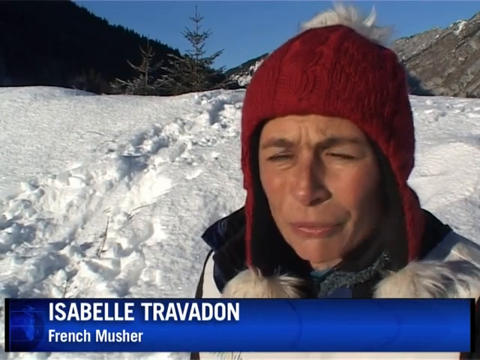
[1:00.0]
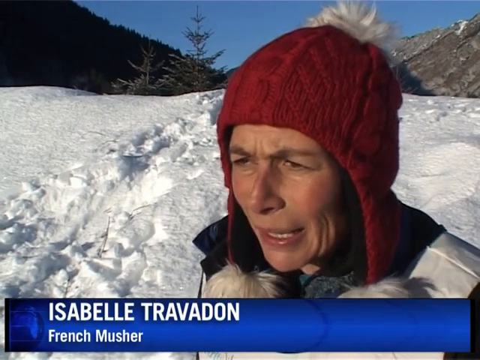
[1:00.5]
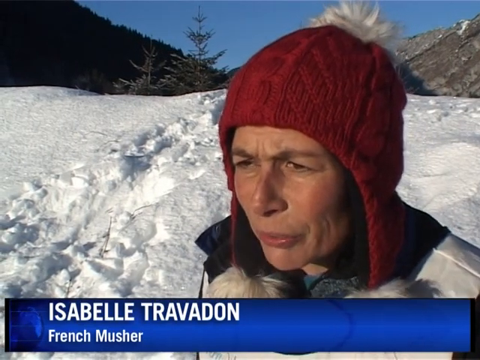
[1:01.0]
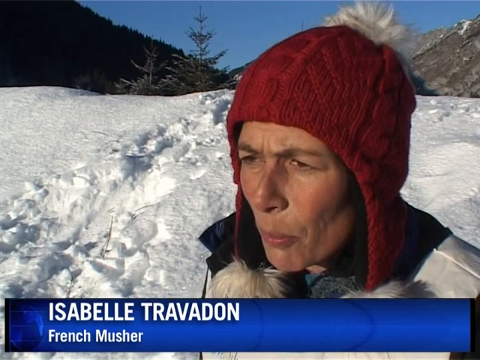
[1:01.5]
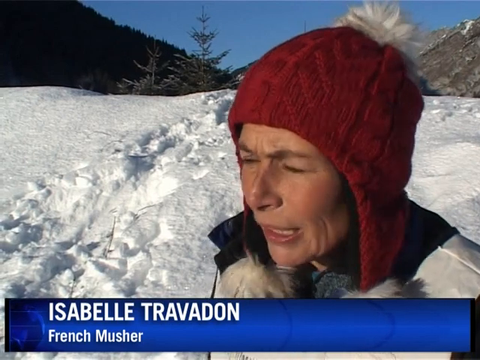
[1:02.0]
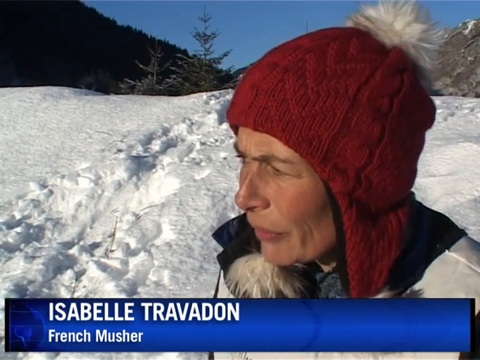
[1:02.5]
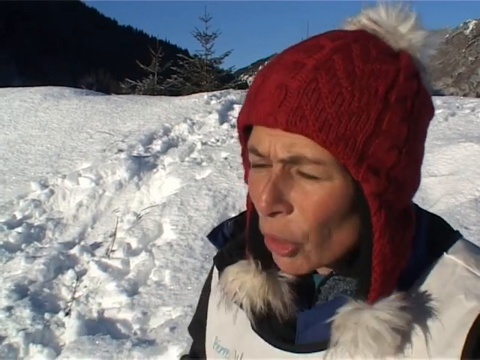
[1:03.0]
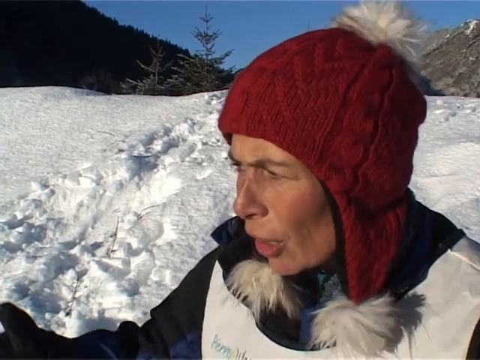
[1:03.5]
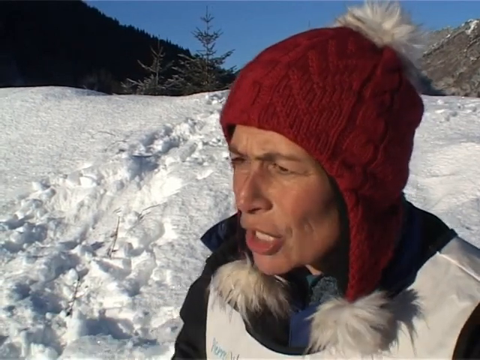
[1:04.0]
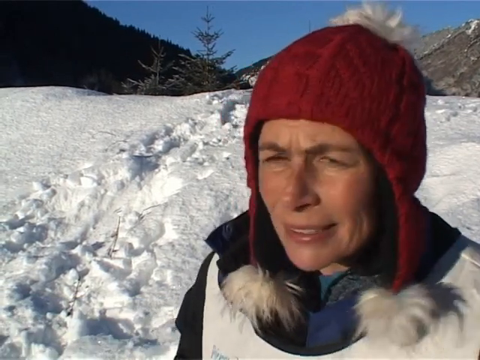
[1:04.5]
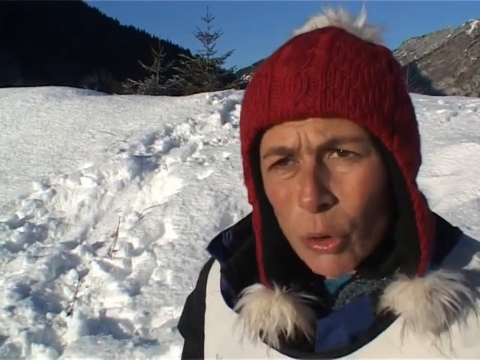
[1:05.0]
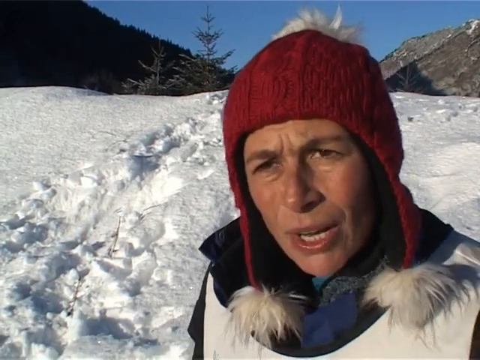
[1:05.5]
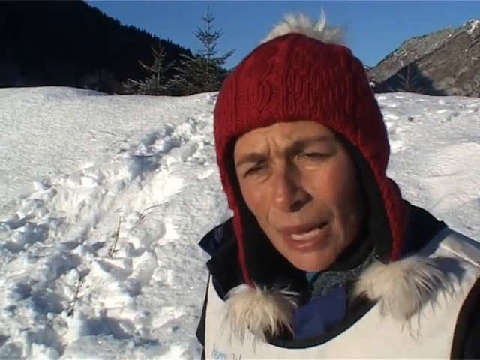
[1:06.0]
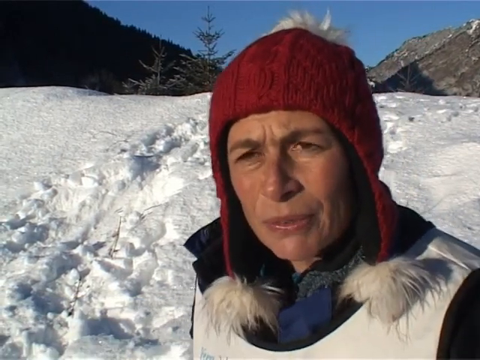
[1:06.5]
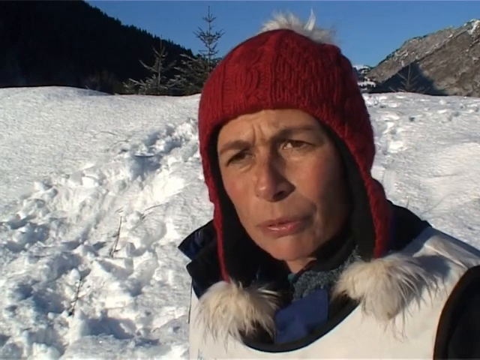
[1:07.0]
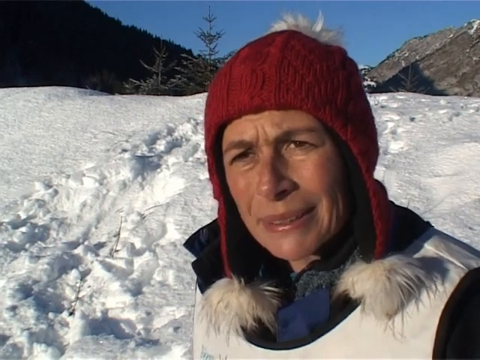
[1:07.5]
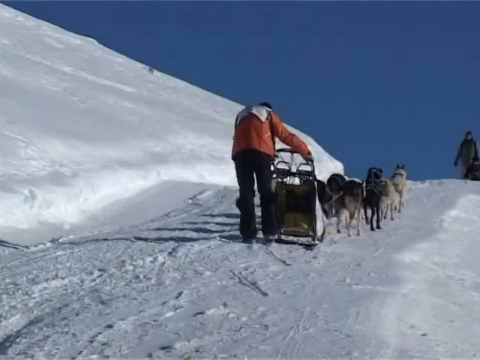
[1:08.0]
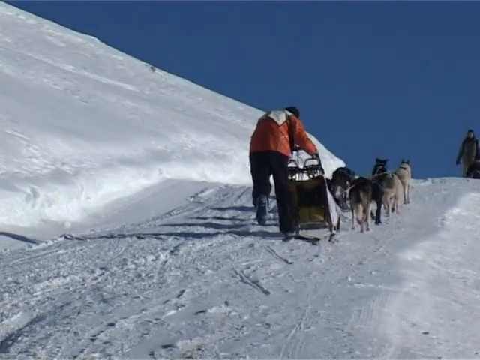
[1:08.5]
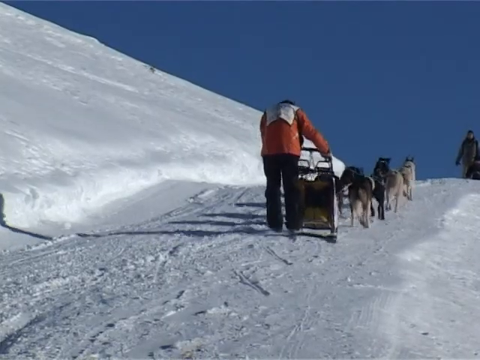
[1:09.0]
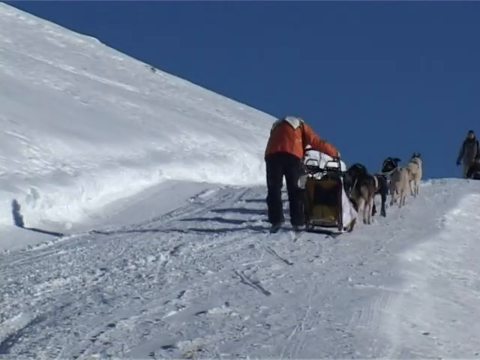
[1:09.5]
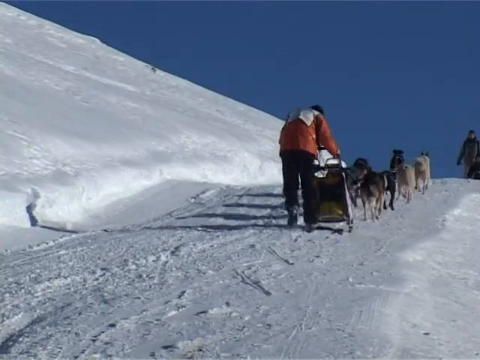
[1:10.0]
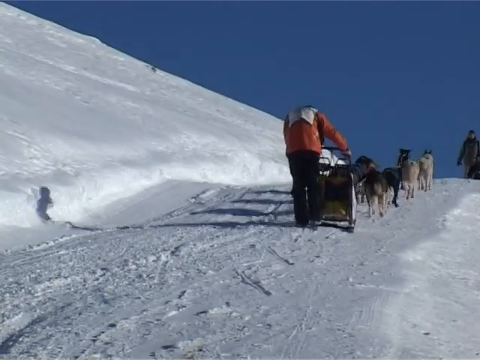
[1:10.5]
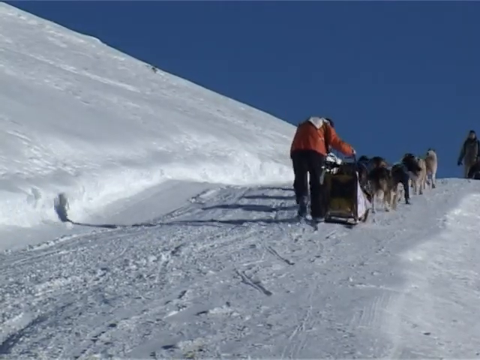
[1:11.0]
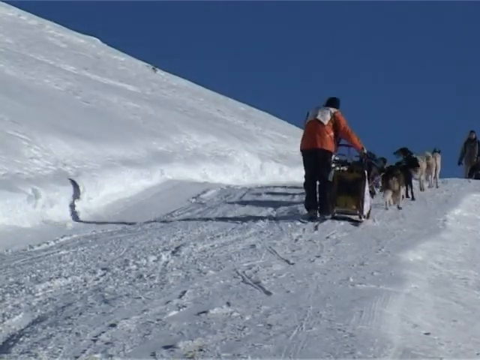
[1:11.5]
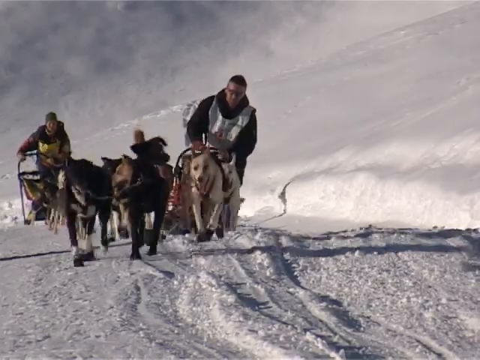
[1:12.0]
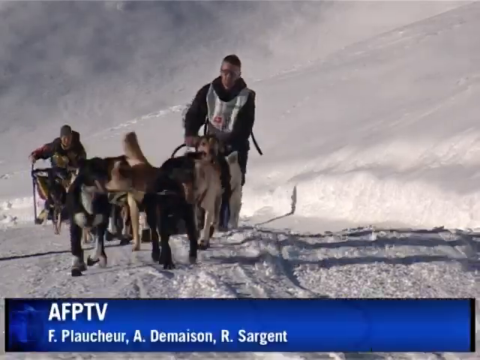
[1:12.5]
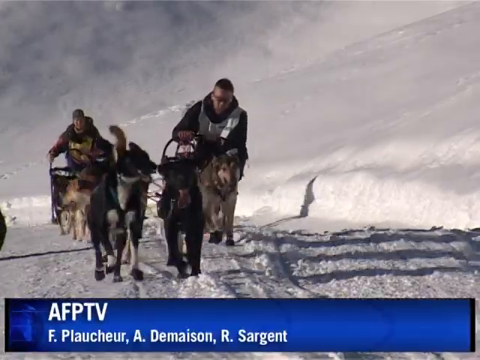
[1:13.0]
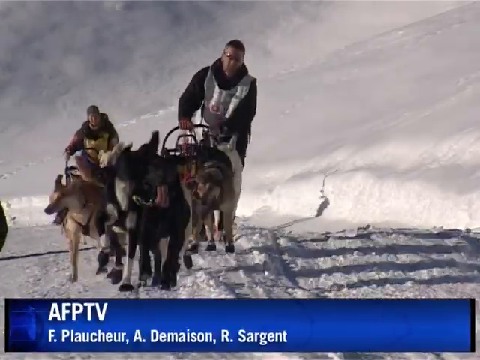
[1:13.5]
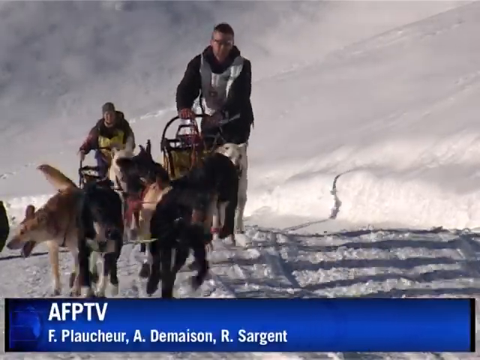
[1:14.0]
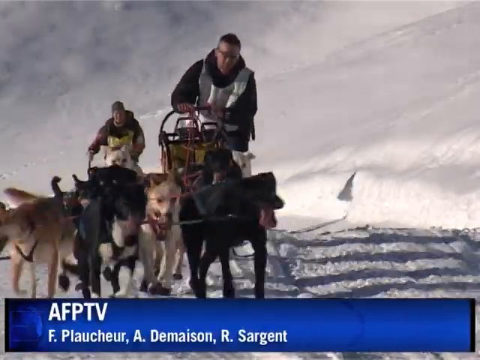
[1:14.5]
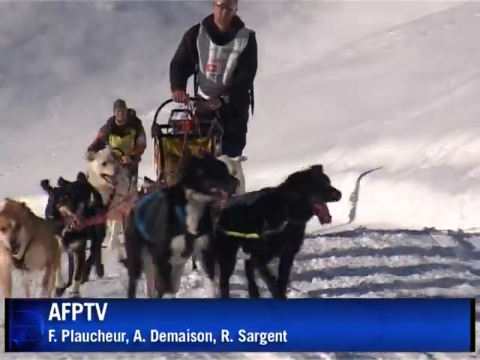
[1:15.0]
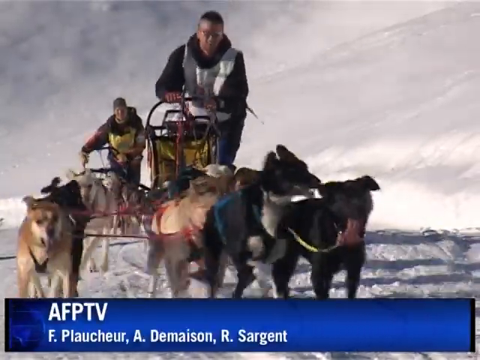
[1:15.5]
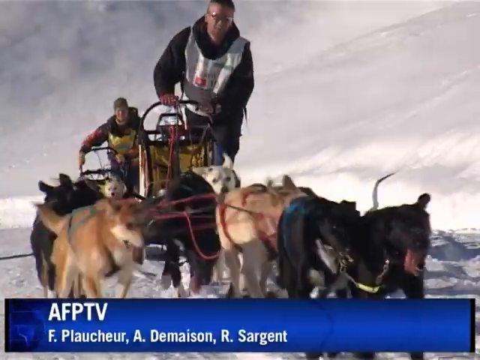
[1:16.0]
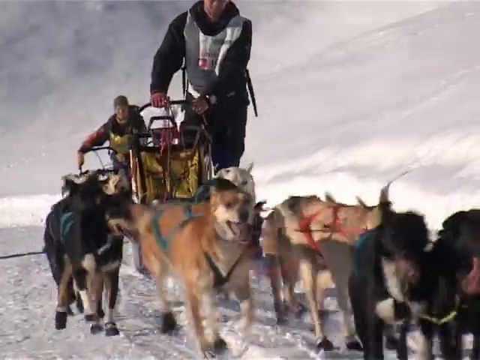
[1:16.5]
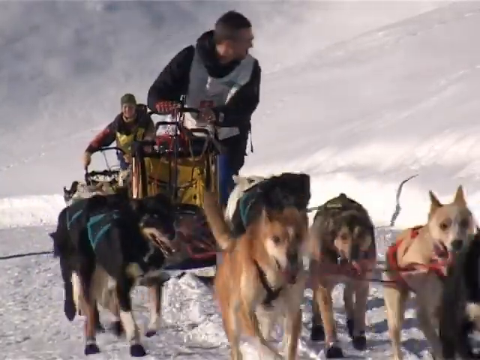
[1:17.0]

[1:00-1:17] A woman, perhaps in her early 40s, wears a red toboggan and a coat with fur on it. Behind her is snow that has been walked in, with mountains beyond and a blue sky. Her name, "Isabelle Travadon", appears at the bottom of the screen, and she is a French musher. A team of dogs then walks up a very large graded snow hill, and the sled's owner has gotten out to kind of help the dogs. A blue sky is in the background.